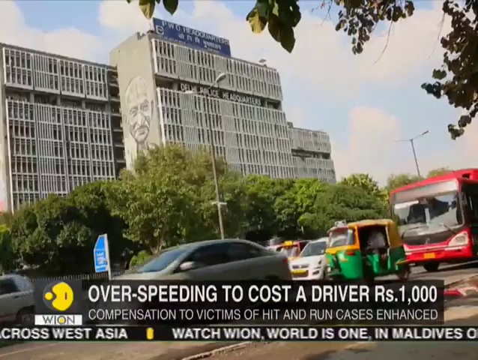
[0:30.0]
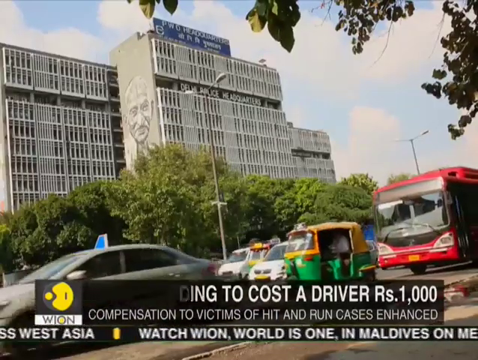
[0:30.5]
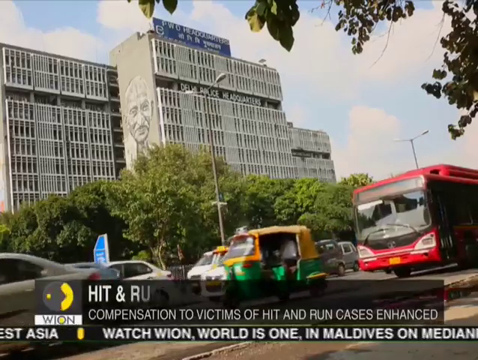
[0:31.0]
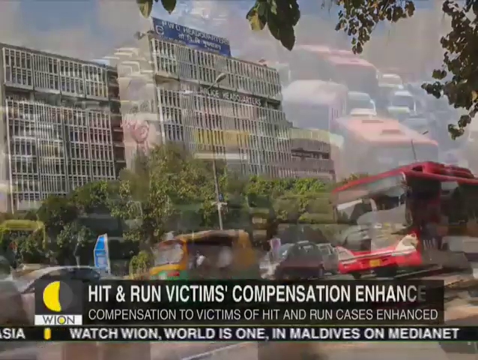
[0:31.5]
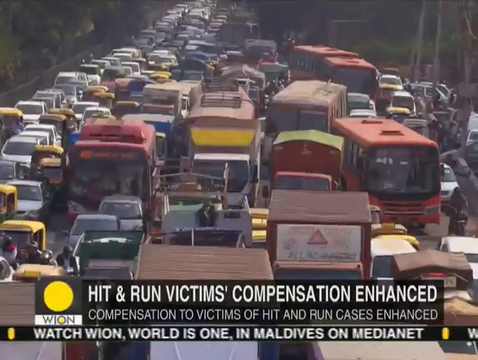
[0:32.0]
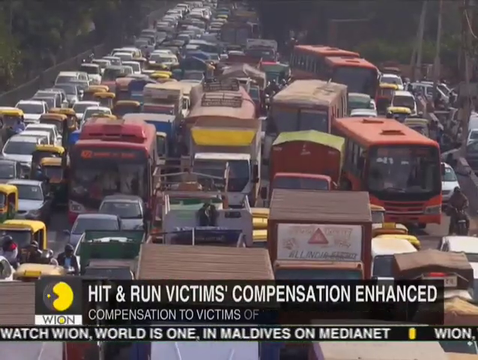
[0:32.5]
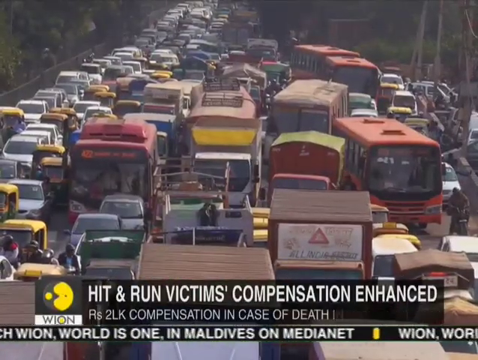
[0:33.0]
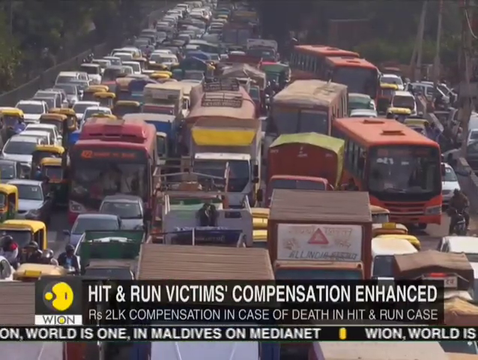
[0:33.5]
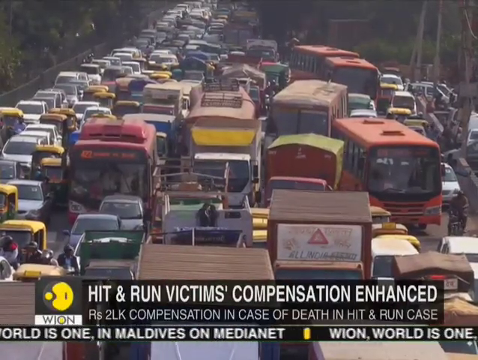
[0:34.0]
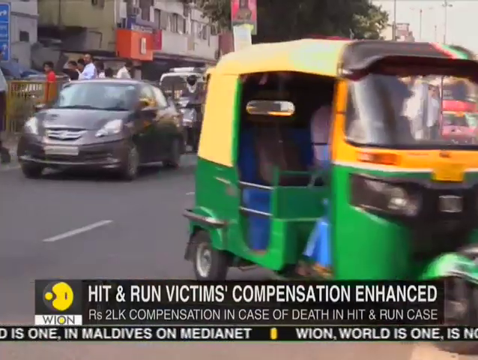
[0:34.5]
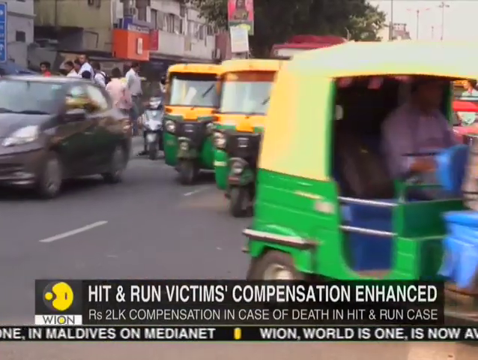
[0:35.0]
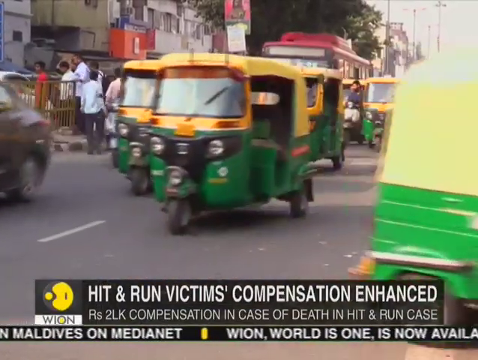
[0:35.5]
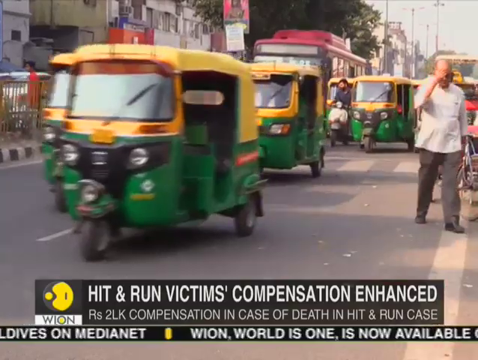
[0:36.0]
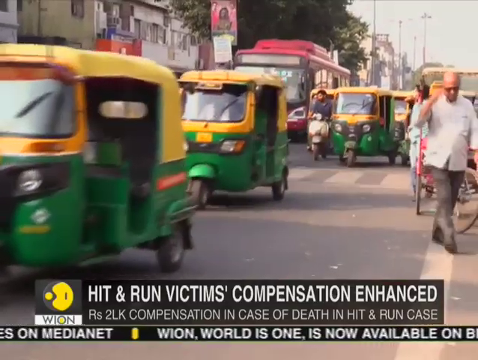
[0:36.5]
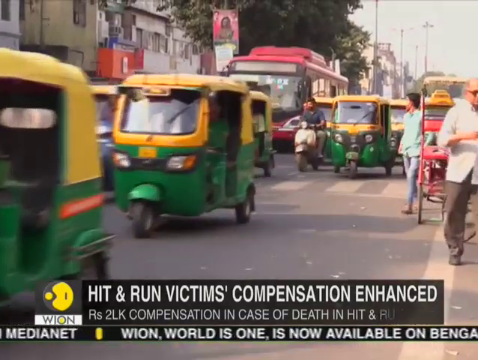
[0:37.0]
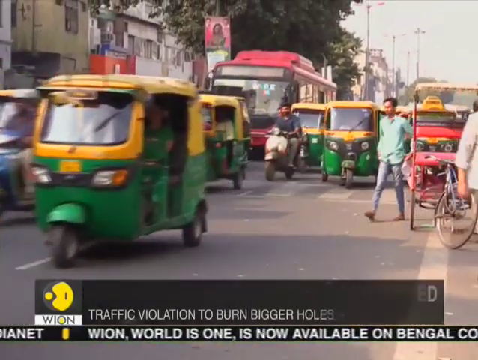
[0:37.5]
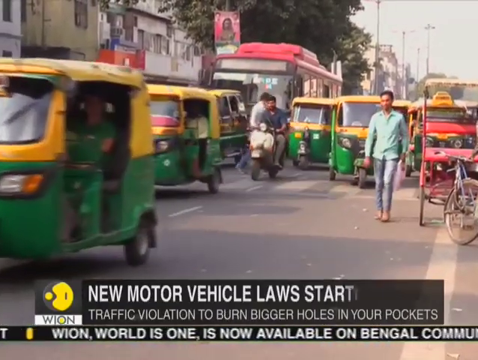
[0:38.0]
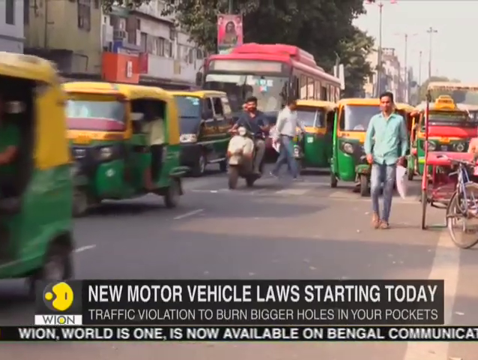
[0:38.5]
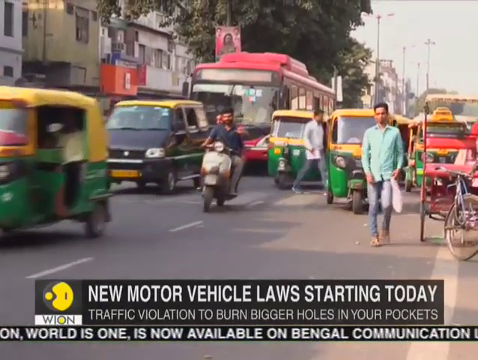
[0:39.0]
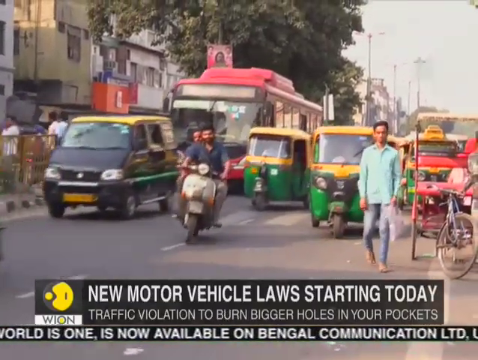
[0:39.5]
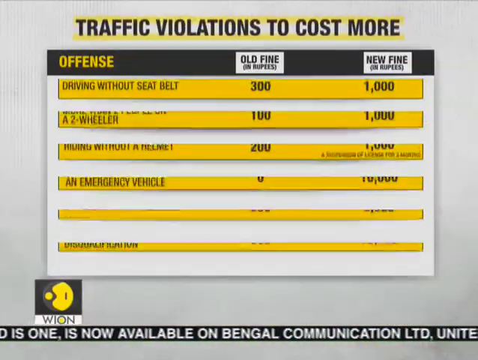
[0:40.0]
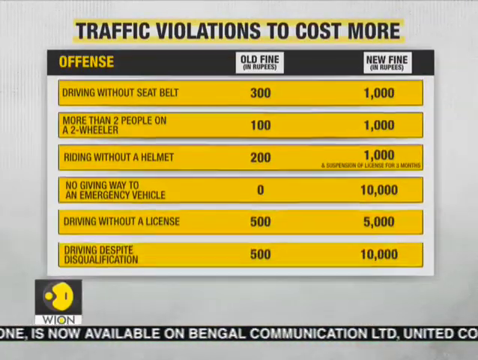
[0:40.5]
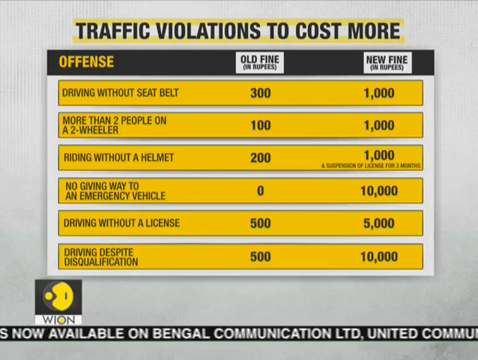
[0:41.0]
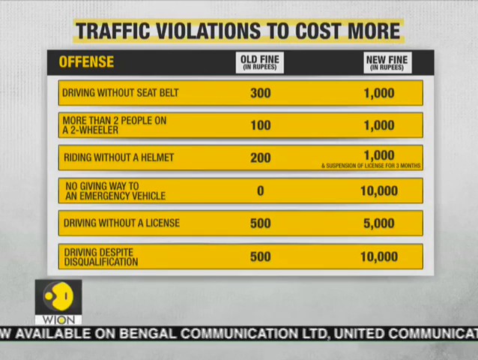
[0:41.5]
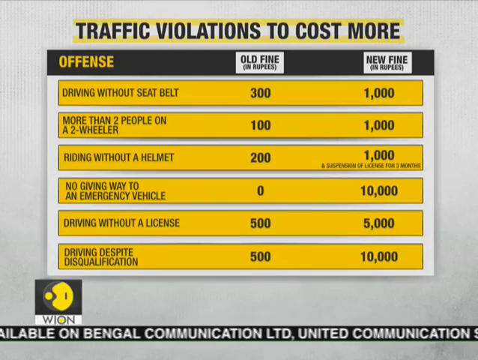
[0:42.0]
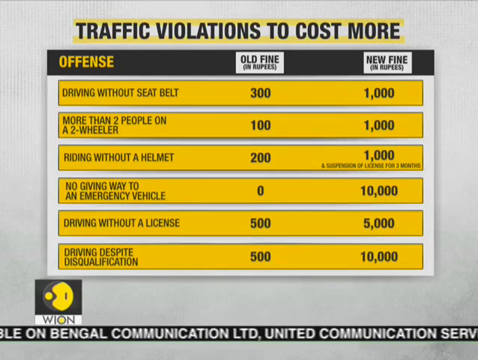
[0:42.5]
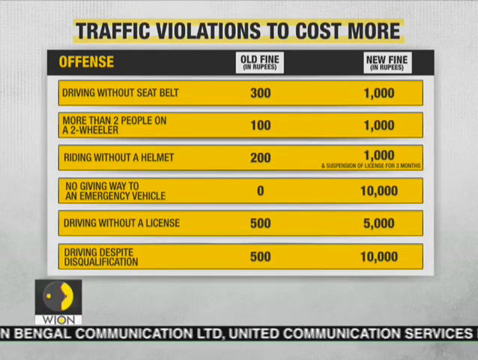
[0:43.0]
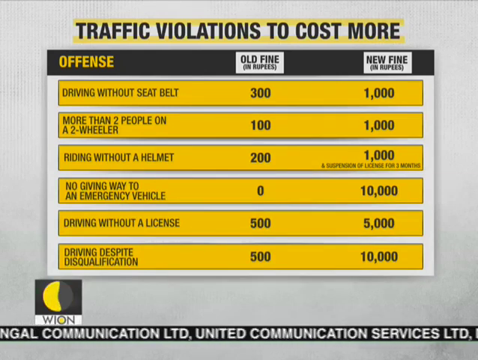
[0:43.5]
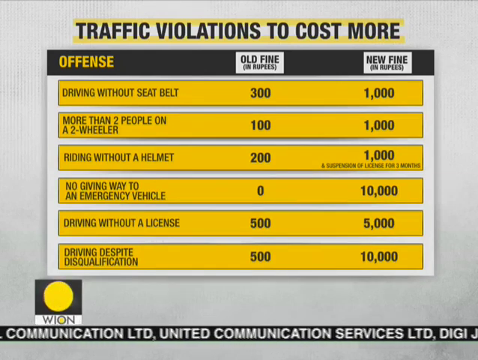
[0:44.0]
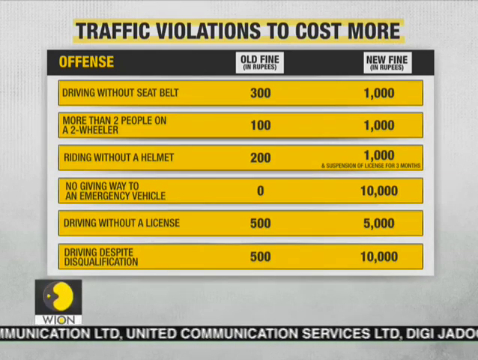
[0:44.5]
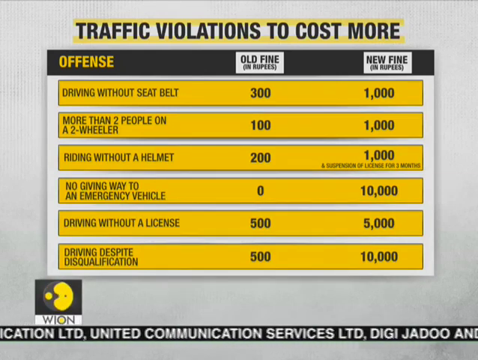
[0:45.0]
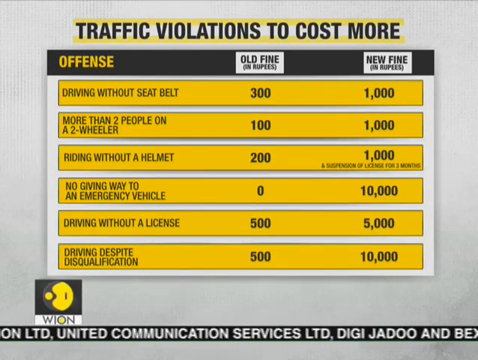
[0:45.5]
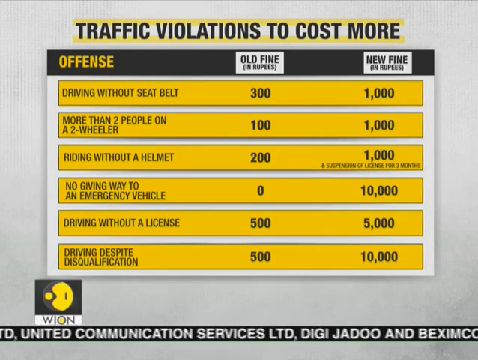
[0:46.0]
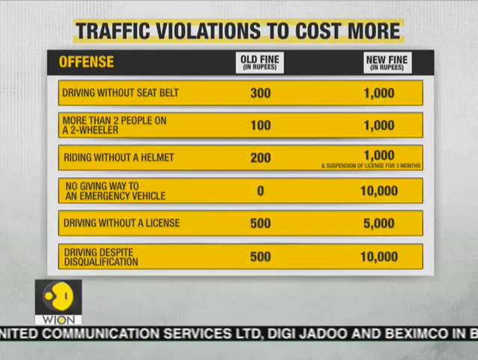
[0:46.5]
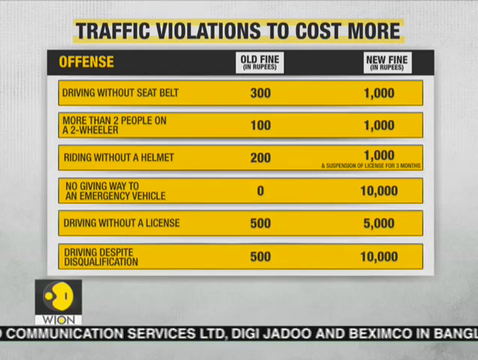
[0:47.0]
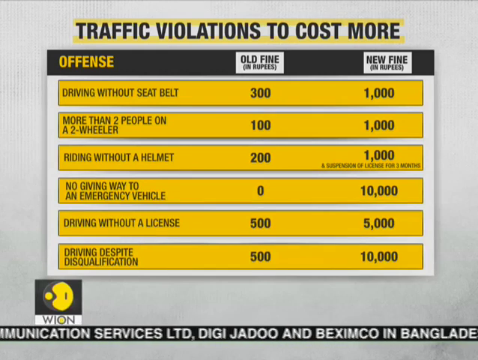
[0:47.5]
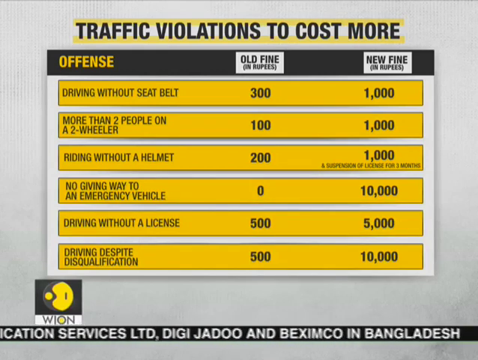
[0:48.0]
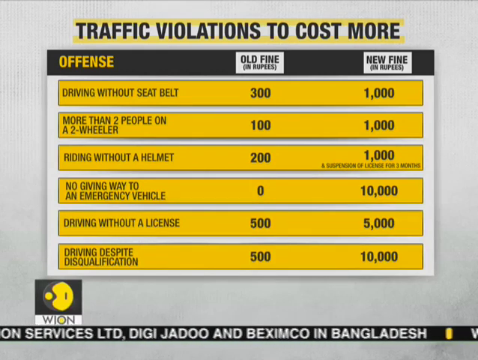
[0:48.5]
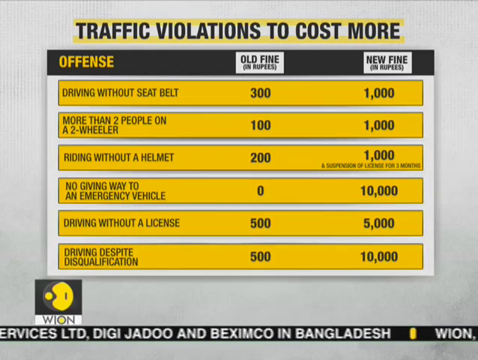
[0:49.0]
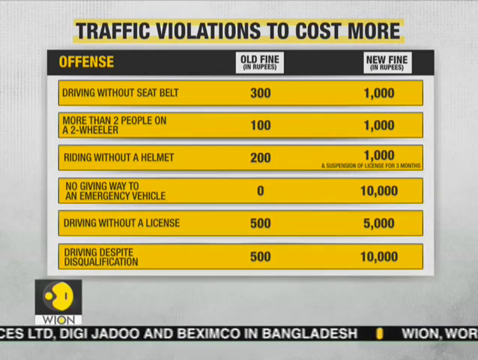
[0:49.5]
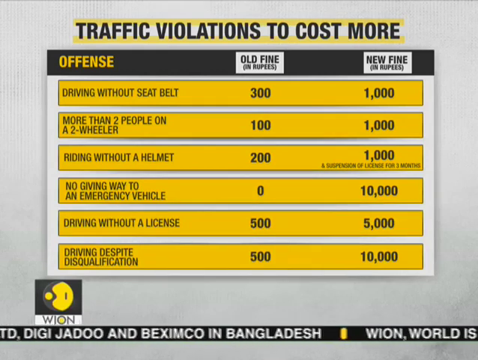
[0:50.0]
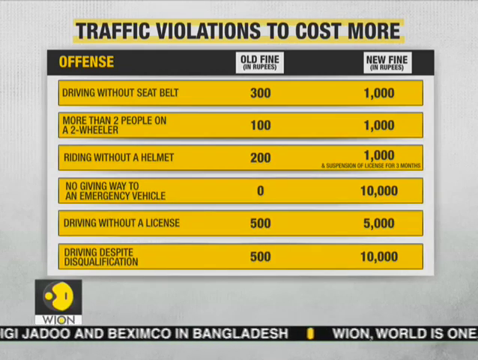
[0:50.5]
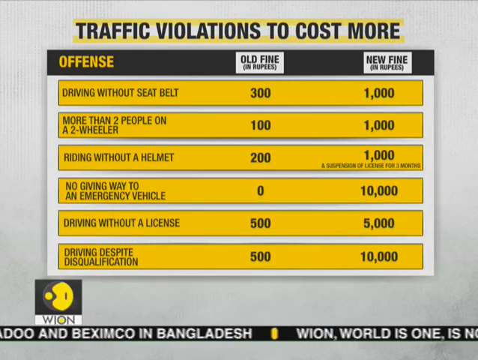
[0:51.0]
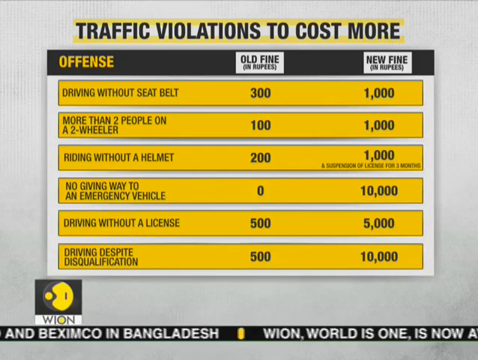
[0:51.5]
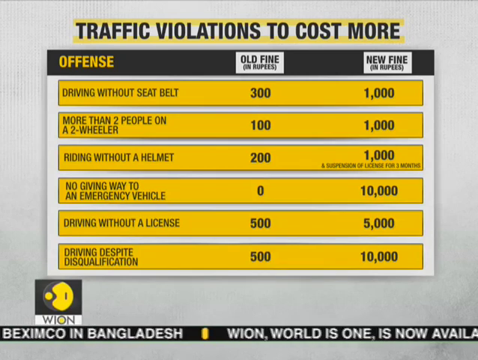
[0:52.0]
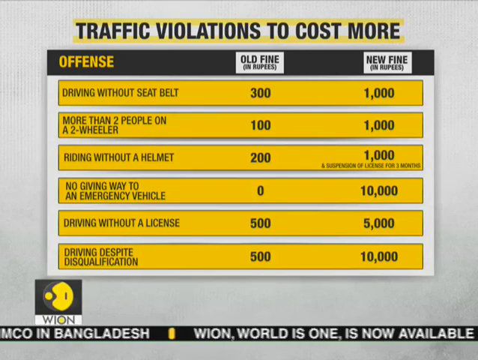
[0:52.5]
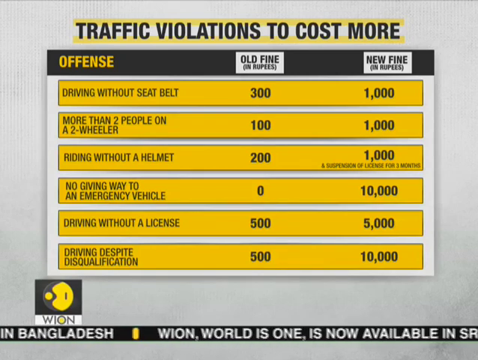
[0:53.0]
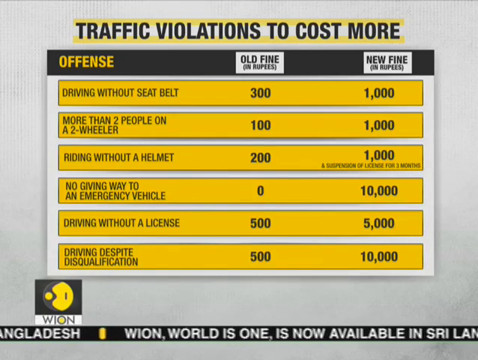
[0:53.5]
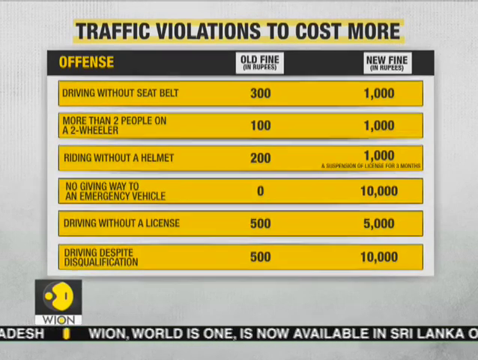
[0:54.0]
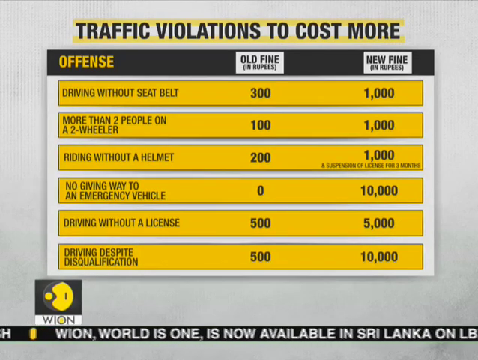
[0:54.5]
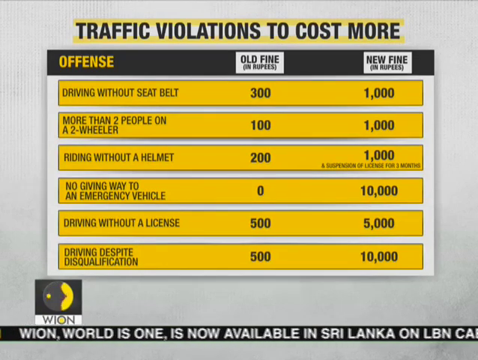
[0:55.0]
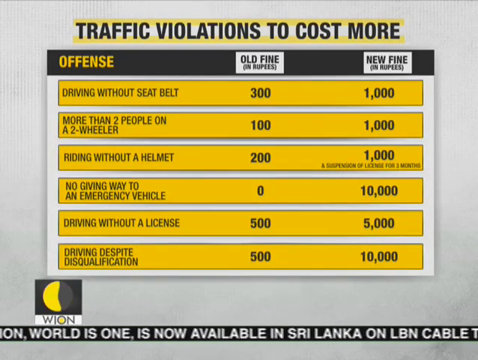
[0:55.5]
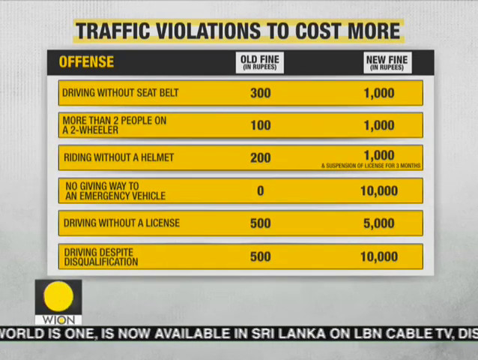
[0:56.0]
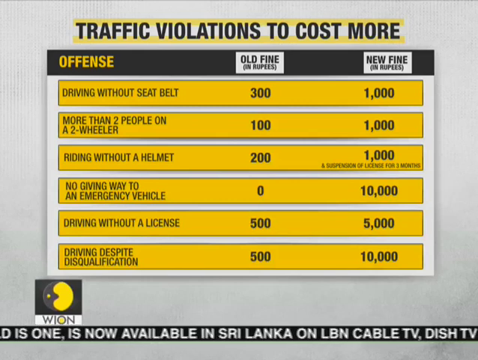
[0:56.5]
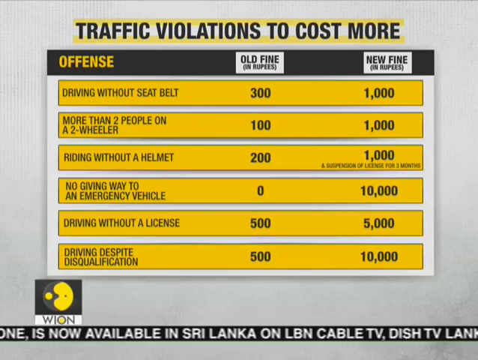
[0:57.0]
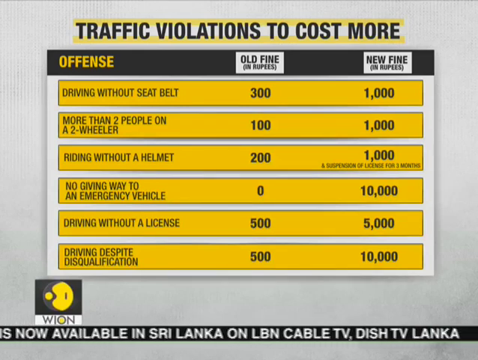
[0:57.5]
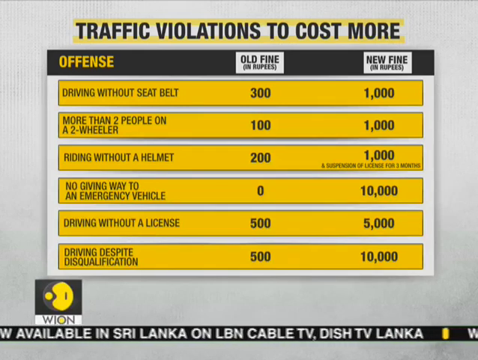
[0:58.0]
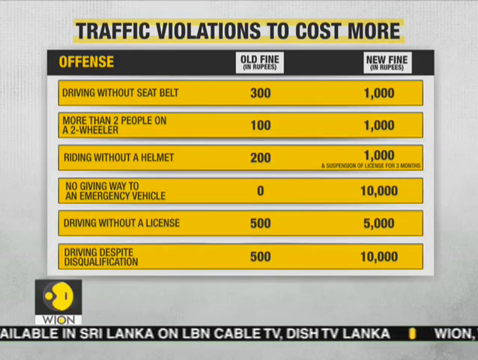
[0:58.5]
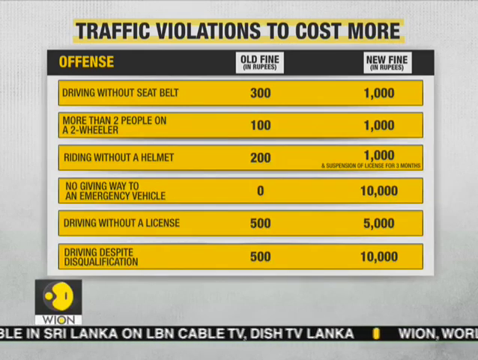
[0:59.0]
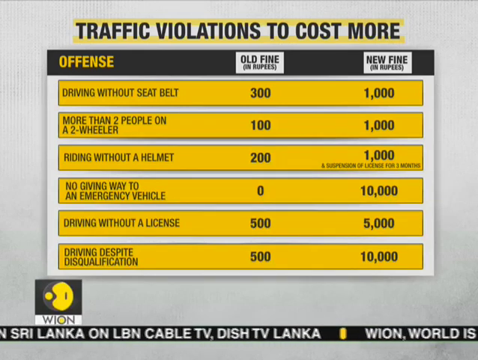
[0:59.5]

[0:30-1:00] The video shifts to another angle showing trees with leaves hanging down and a tall cream building on the left, under a blue sky with white clouds. Poles stand in the street, and shrubs and trees are on the left side. Text reads "over speeding to cost a drivers 1000 rands." Small cars, a motorbike, a three-wheeler and a red truck pass in the street, and text also reads "hits and run victims compensation enhanced." Three-wheeler motorbikes pass, and buses are parking. A page pops up titled "traffic violations to cost more," with the offences in their own column alongside an old fine and a new fine.